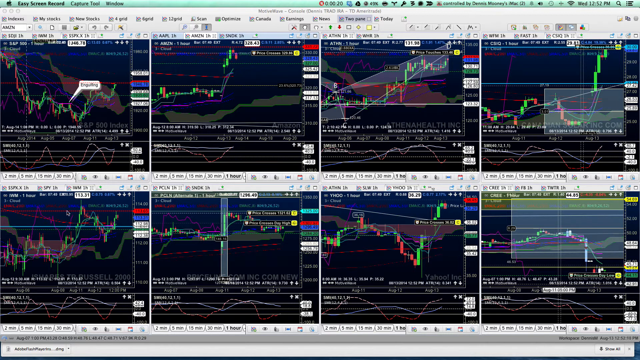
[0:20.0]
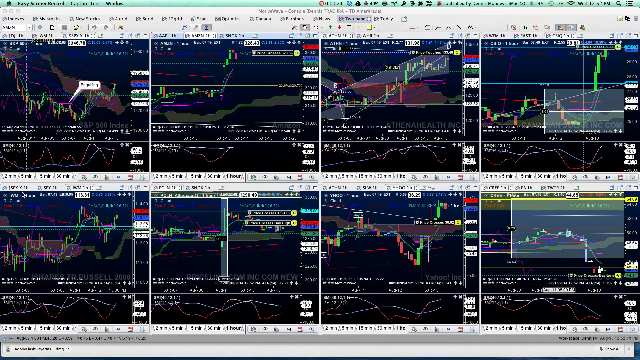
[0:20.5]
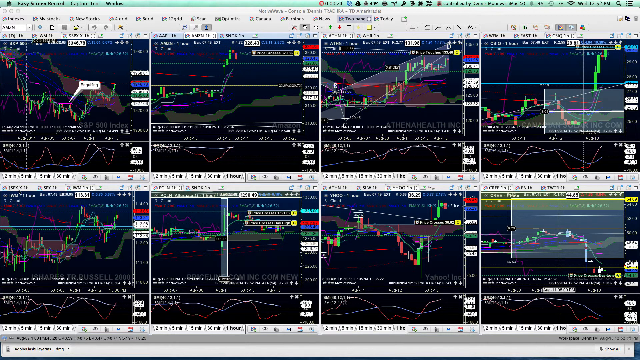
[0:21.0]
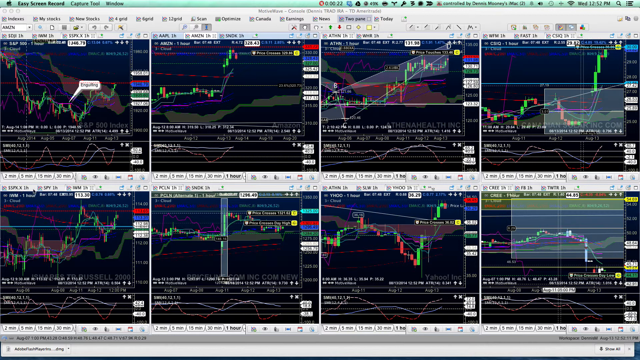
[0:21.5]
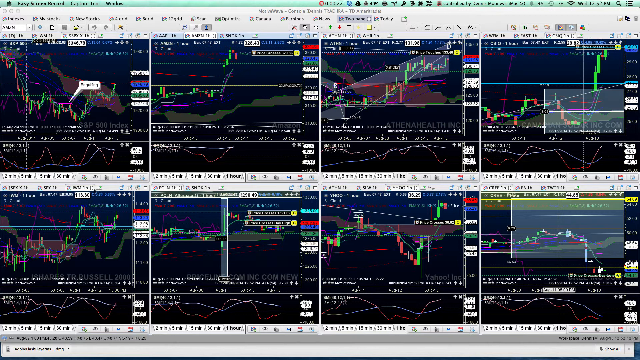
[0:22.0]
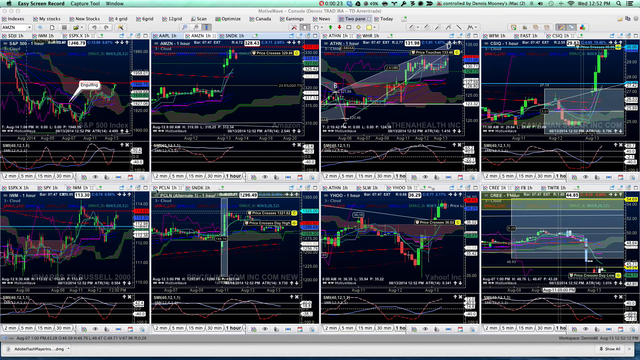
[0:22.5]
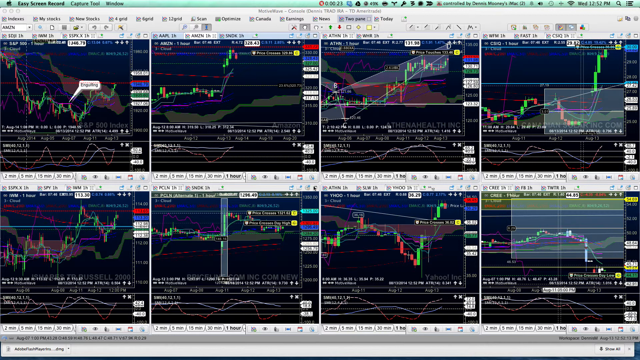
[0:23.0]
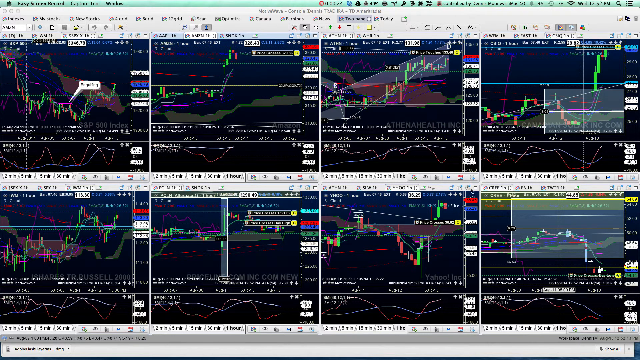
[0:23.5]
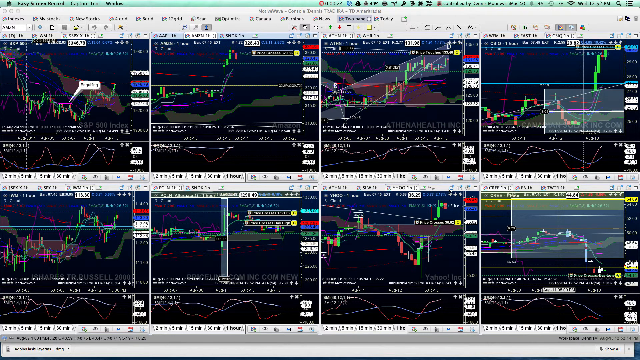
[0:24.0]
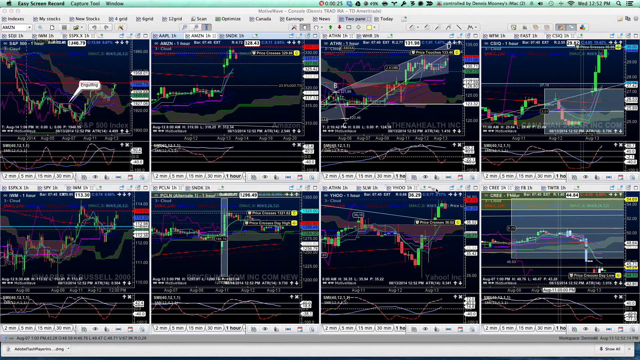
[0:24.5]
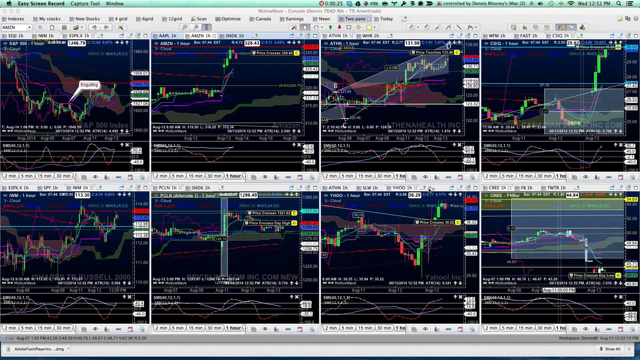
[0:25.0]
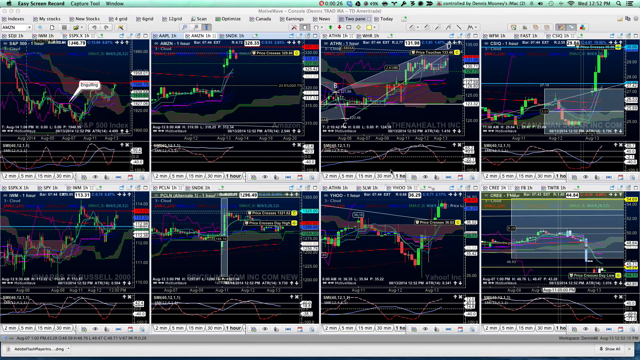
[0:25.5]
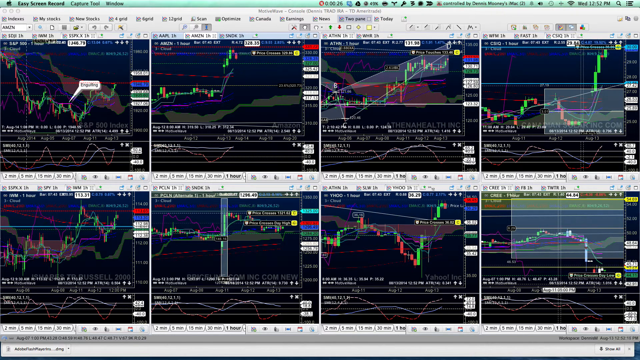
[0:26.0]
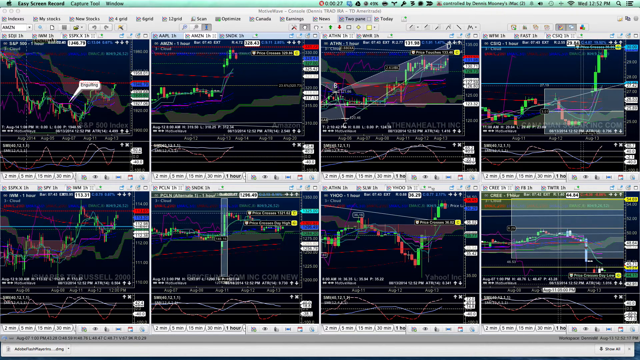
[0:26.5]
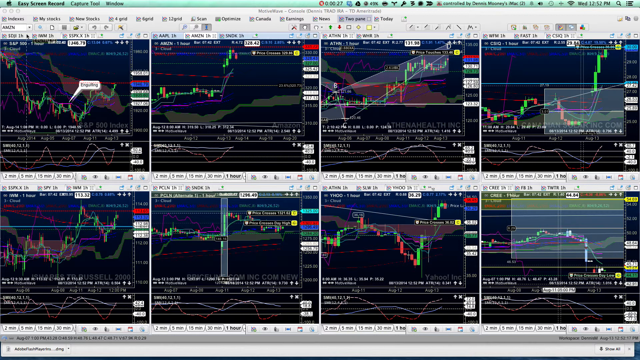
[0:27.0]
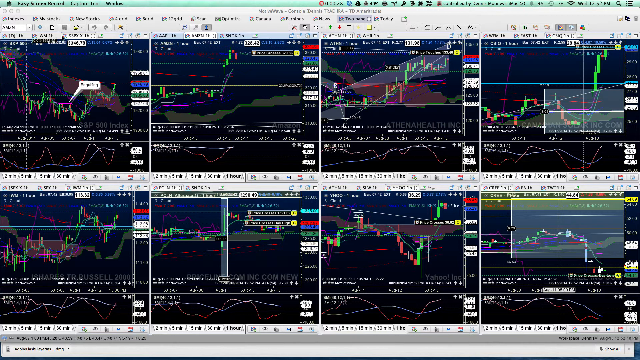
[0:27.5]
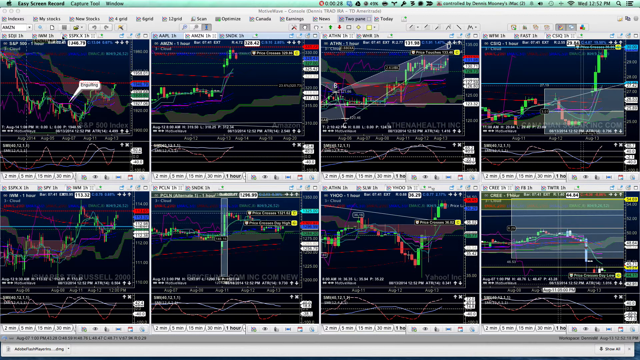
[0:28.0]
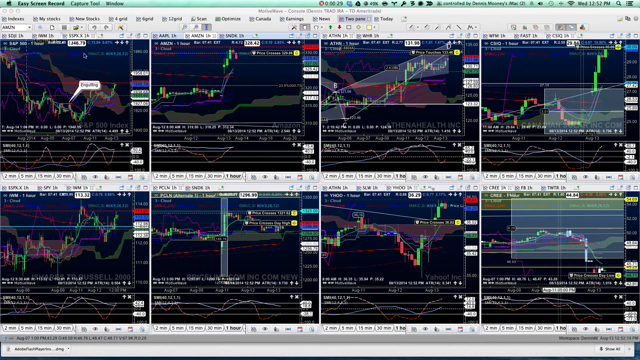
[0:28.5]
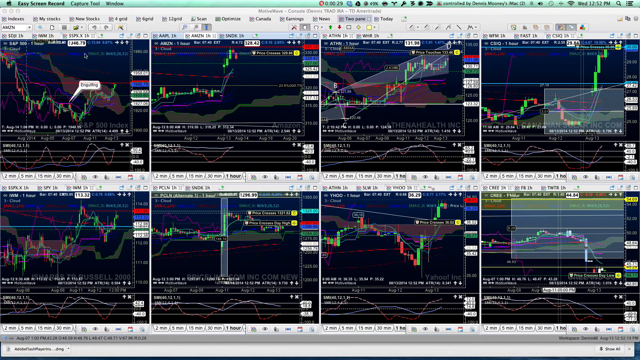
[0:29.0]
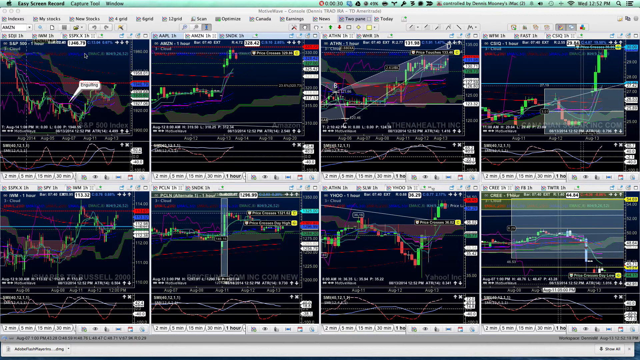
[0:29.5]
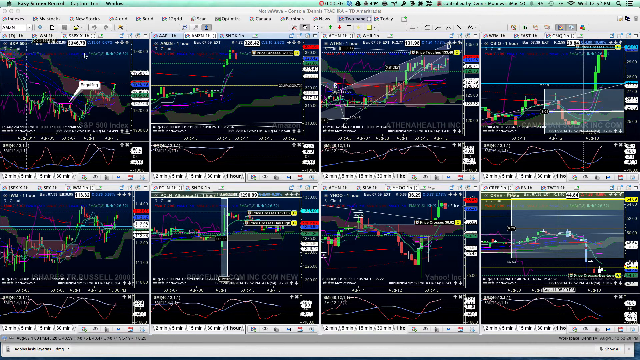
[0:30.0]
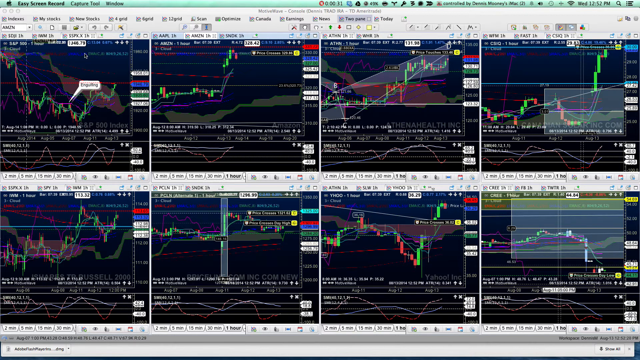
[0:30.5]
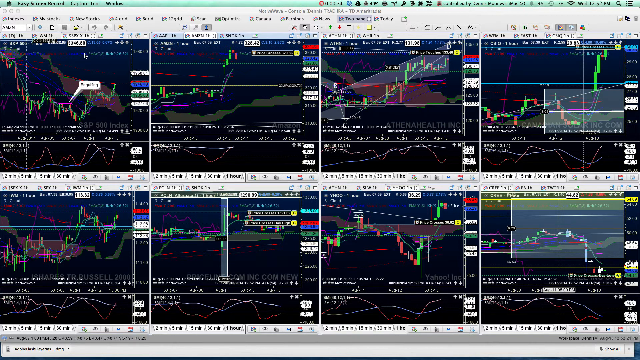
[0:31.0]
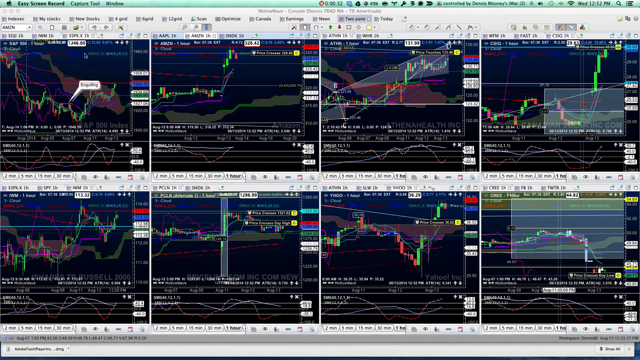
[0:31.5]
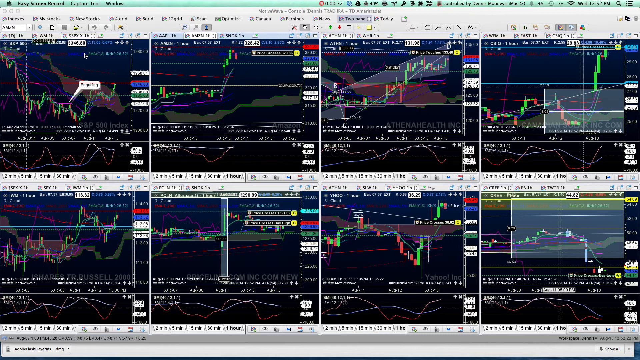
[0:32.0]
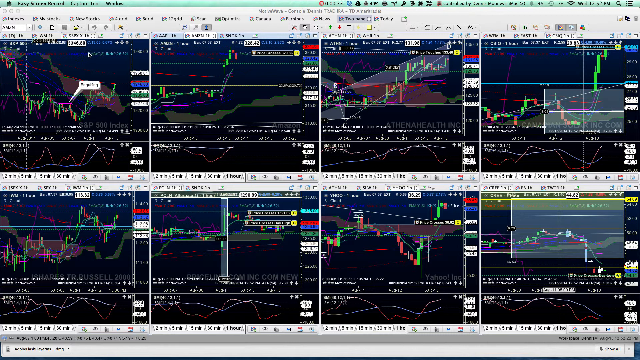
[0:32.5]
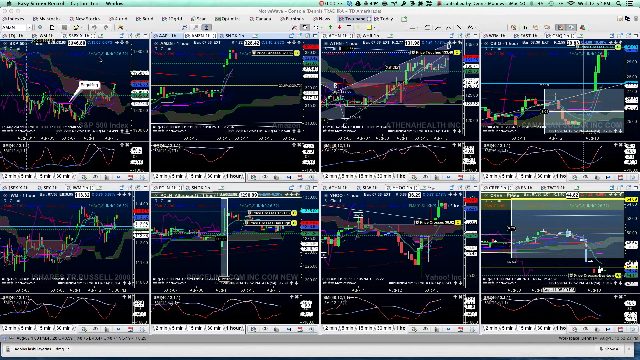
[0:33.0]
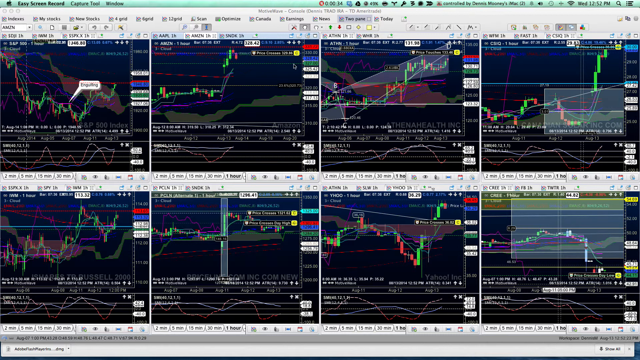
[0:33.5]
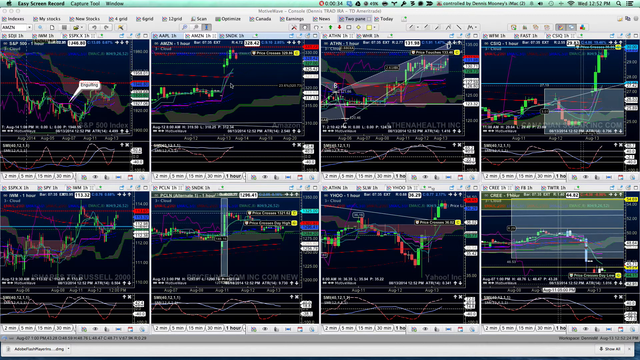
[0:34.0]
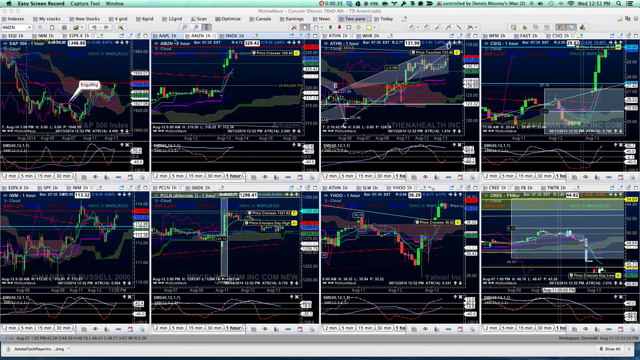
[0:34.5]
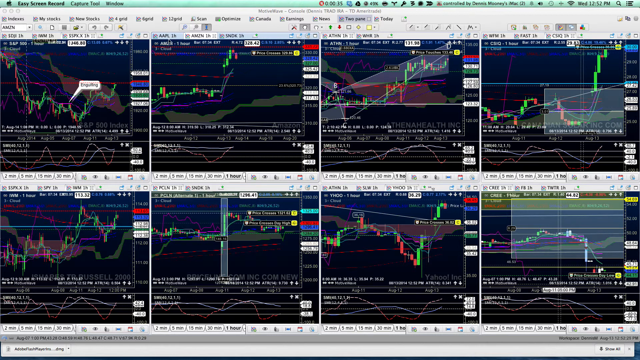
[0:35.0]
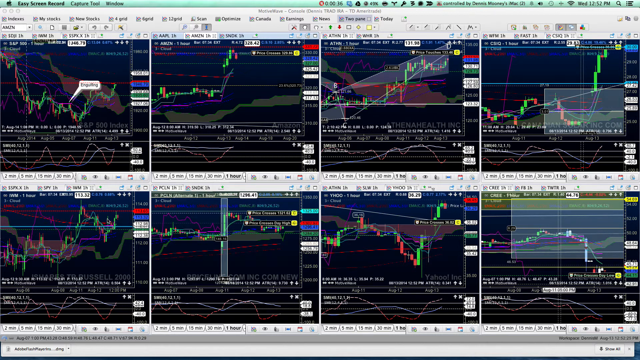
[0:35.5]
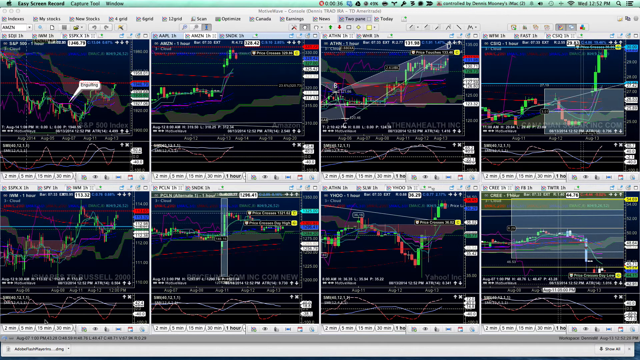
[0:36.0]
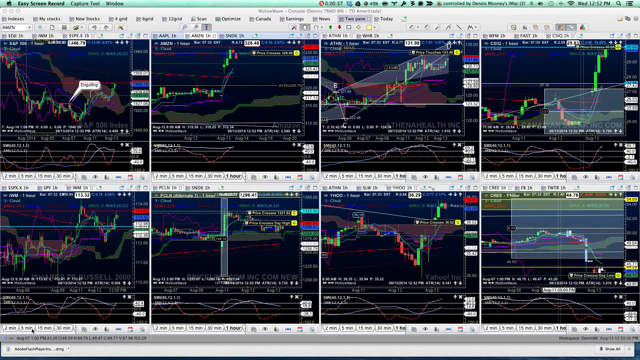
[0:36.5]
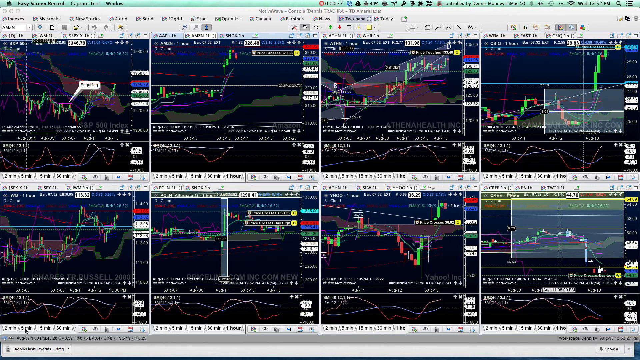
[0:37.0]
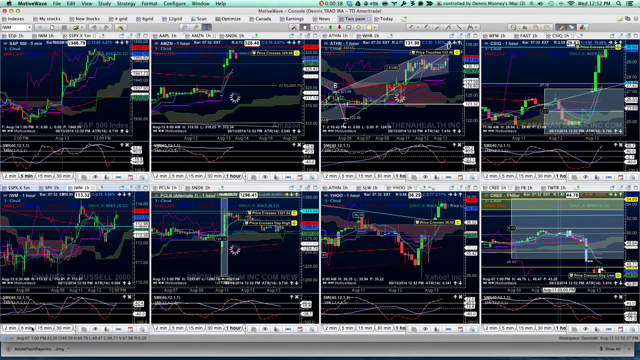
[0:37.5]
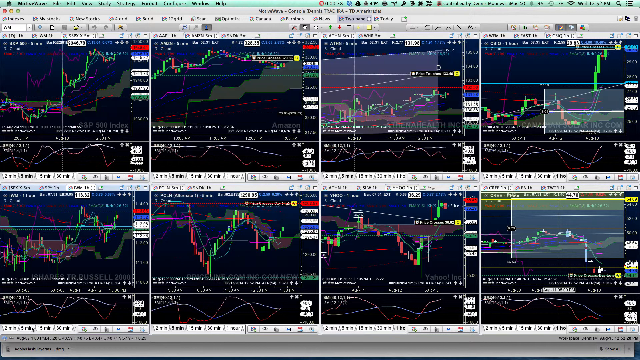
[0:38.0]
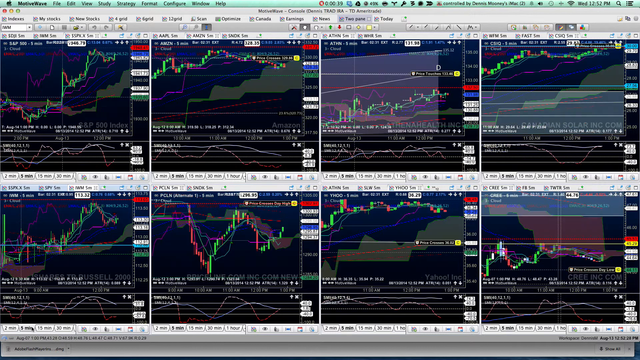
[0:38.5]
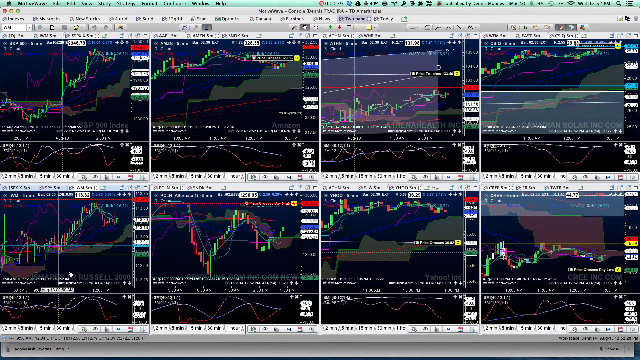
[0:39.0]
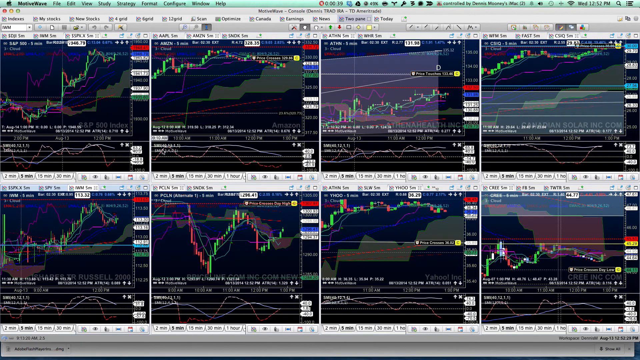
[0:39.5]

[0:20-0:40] The user scrolls over to the third chart in the bottom row, then up to the top left, first chart. An arrow appears on that chart near the middle, where the green and red lines form a green rise, a fall back down to red, and a rise back up to green, sort of like a U shape. A word box or speech-bubble shape with the arrow points at the second up point of the U and labels it "engulfing". The user moves the mouse and clicks on a button, though it is not very clear, and all the charts refresh and change shape. The names stay the same while the chart shapes change, so they are possibly showing a different factor.